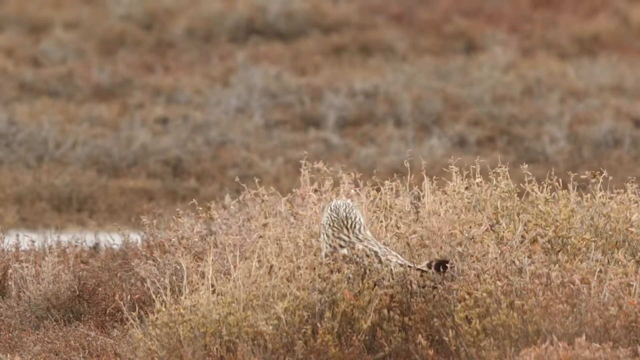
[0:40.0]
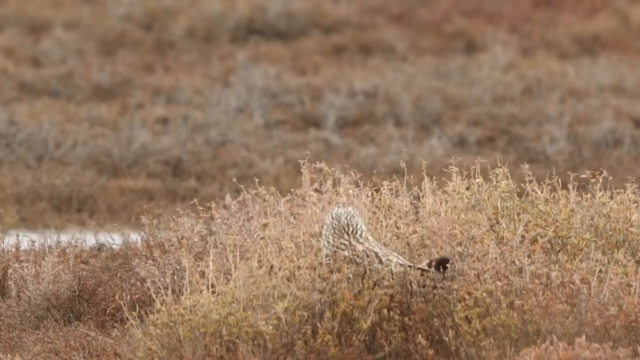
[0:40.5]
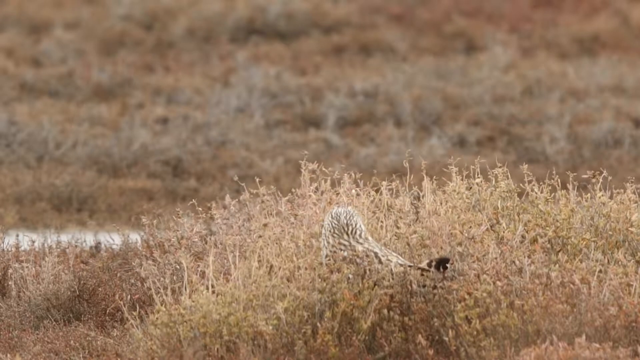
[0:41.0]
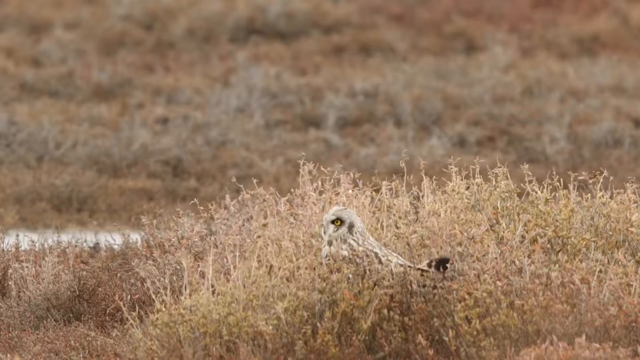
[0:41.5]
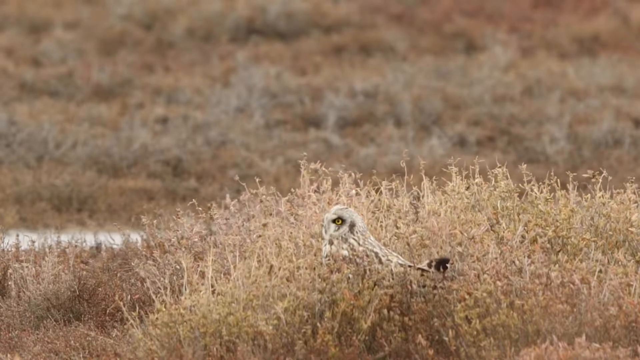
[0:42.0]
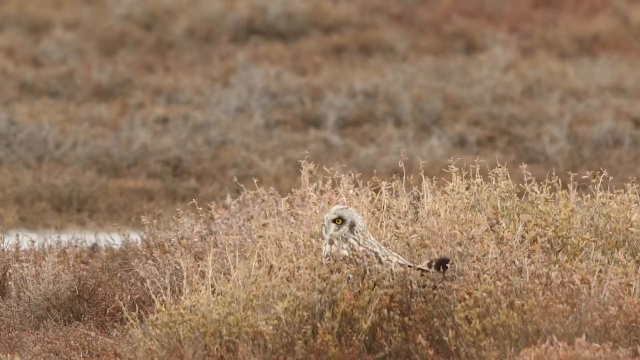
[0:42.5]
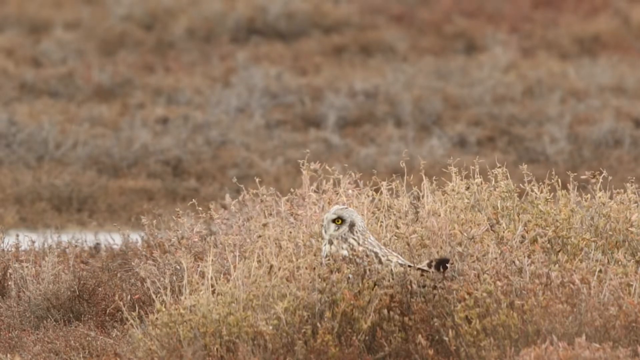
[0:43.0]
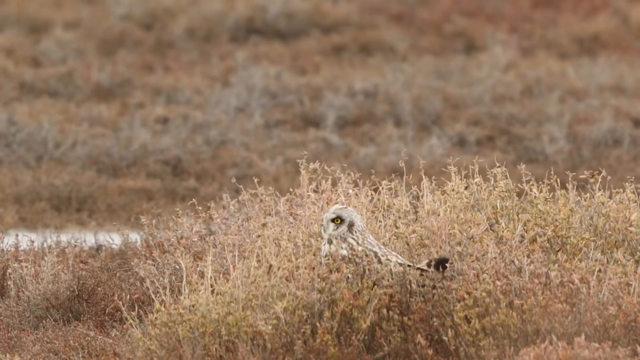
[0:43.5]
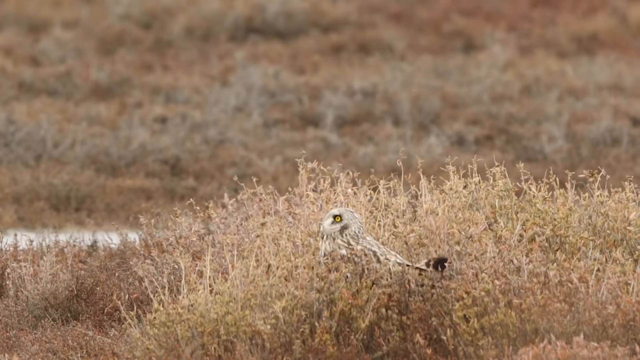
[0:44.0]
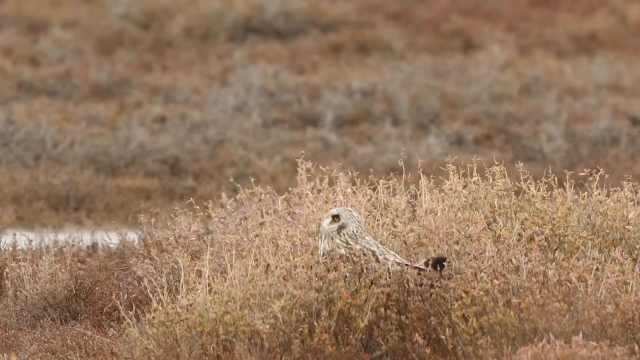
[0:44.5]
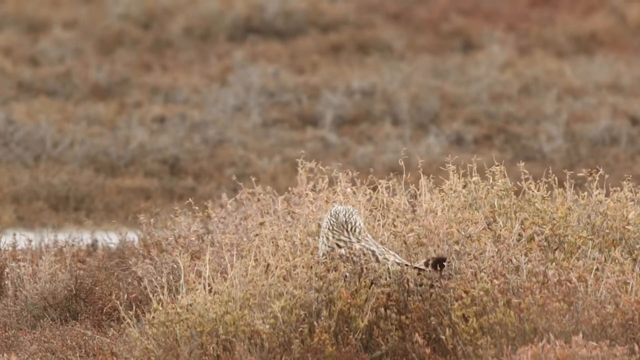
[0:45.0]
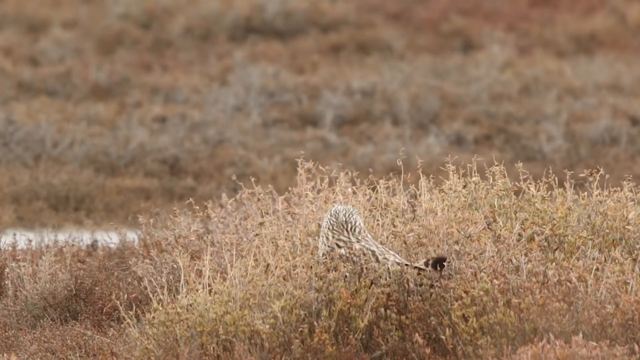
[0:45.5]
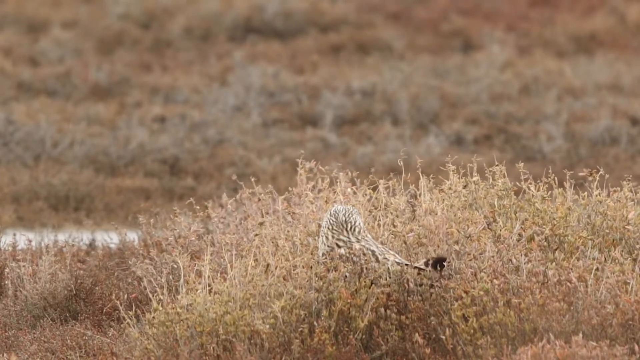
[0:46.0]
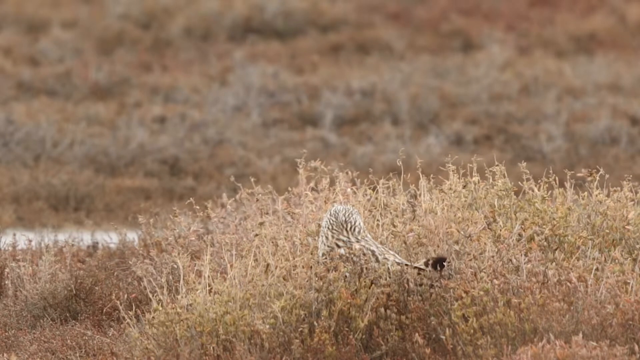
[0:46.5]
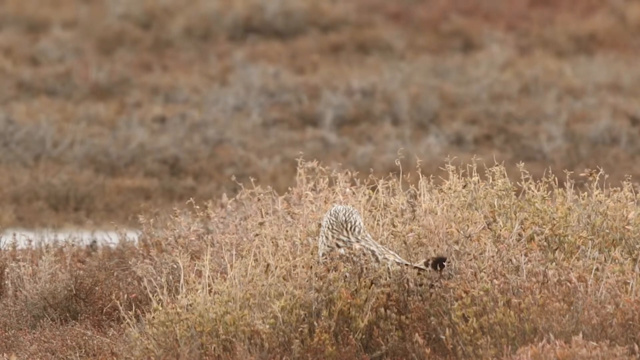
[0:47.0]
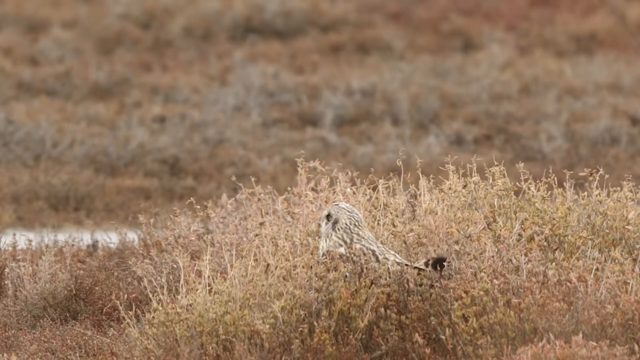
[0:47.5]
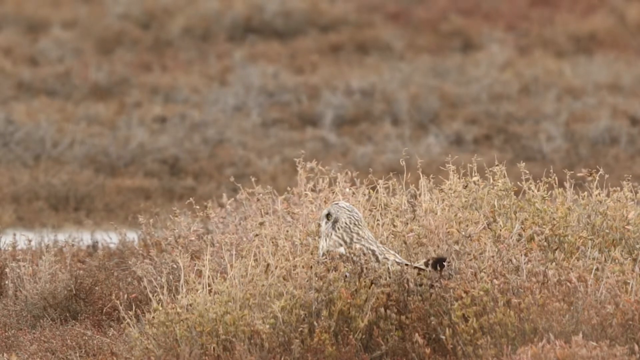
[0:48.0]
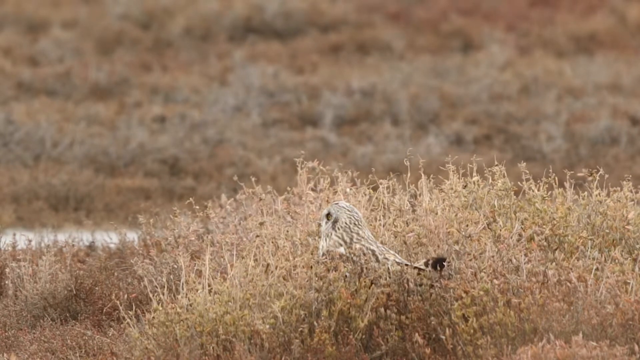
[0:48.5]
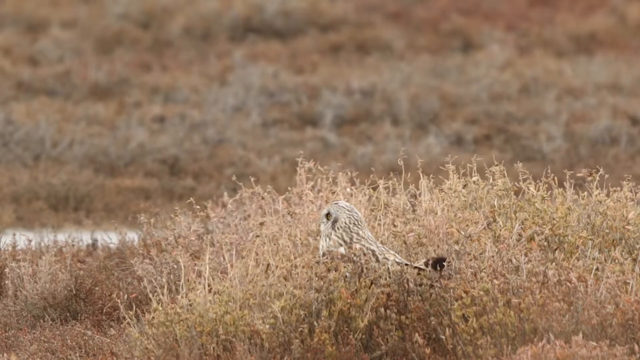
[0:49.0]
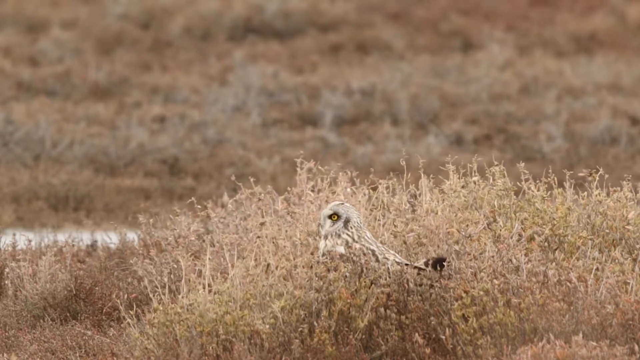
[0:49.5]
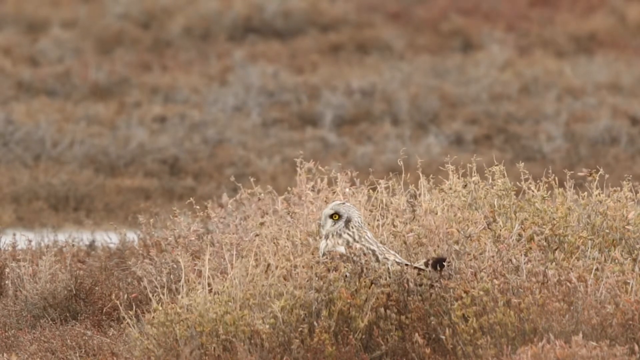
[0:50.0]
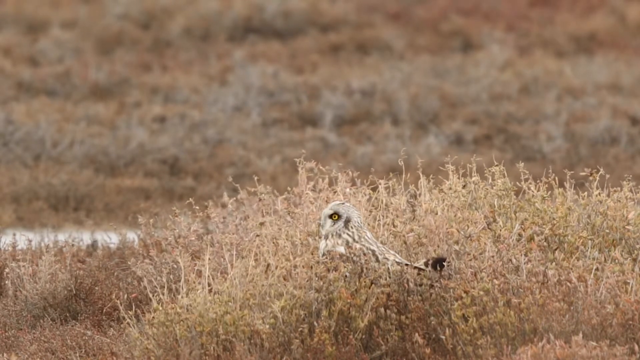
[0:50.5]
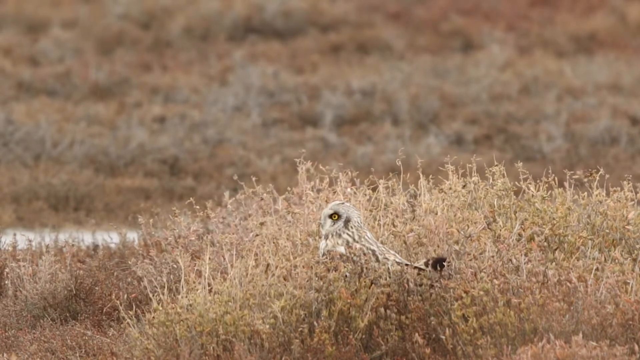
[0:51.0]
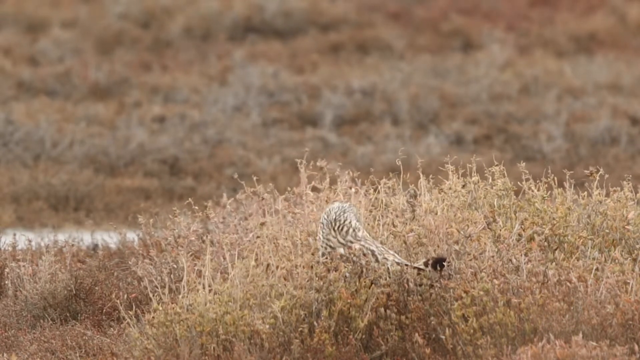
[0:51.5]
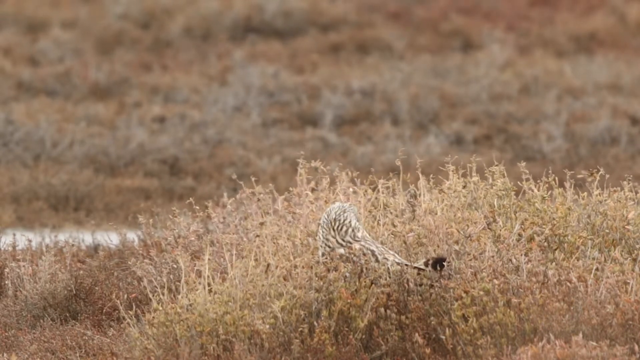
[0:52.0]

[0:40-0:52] The owl continues to rotate its head, looking up and then back down. It moves its head to the left, looks up, looks to the right, looks to the left, and then looks further to the left. The dry grass it is lying on keeps moving; it looks like dead weeds of a light tan color, fluttering as the wind moves them. The owl appears to be white and gray, and the tip of its tail is black.